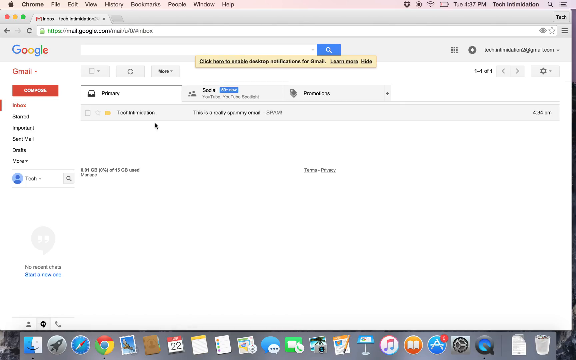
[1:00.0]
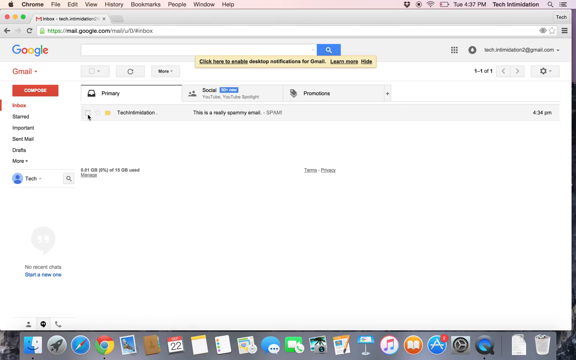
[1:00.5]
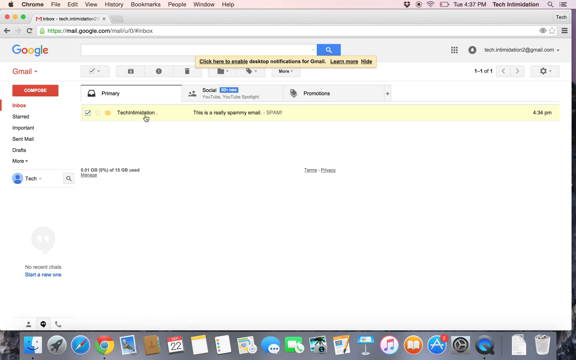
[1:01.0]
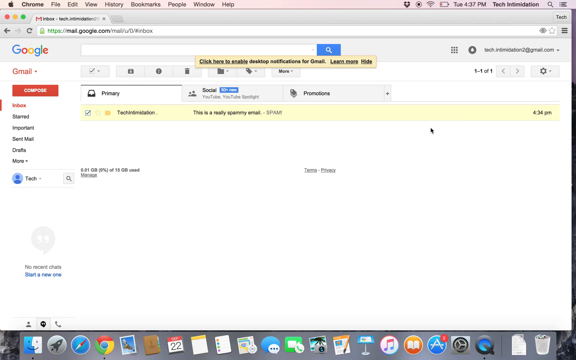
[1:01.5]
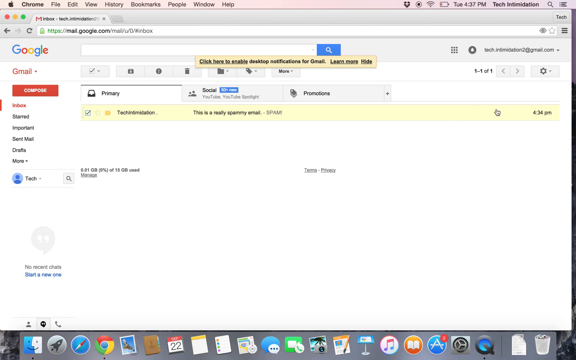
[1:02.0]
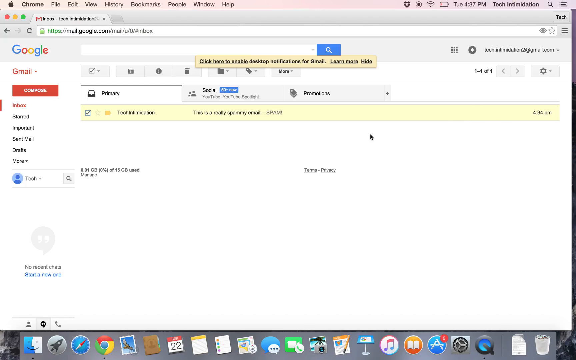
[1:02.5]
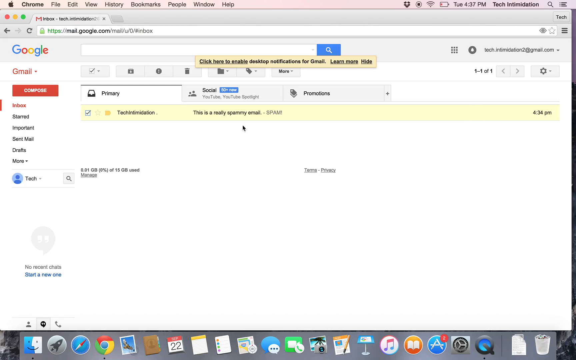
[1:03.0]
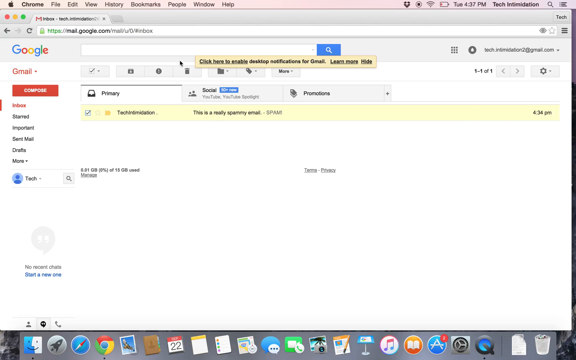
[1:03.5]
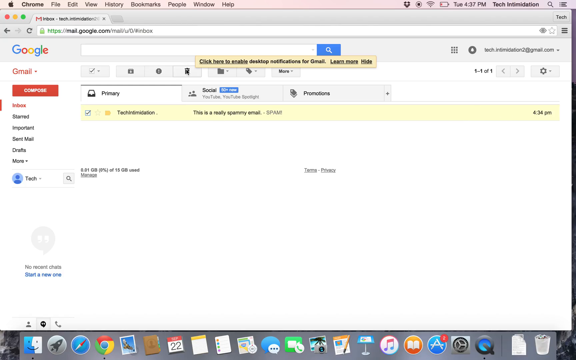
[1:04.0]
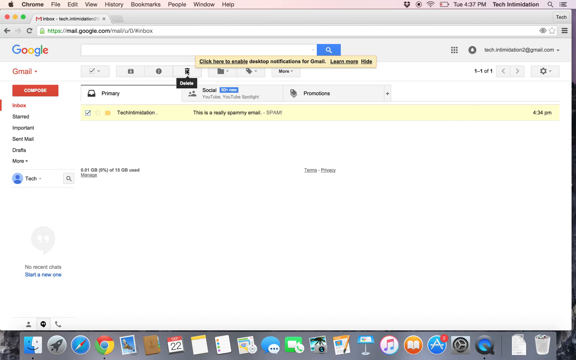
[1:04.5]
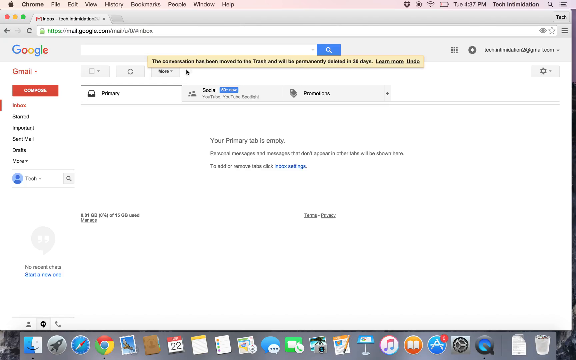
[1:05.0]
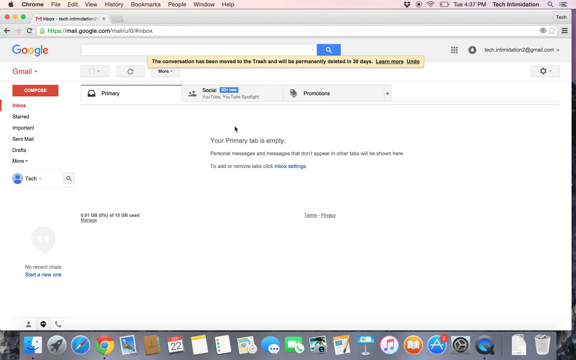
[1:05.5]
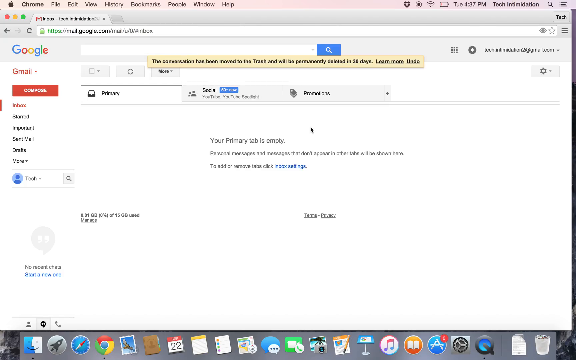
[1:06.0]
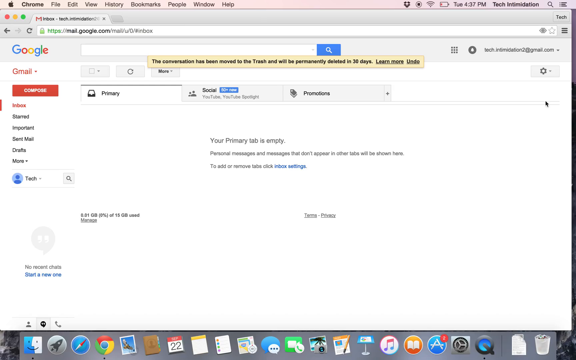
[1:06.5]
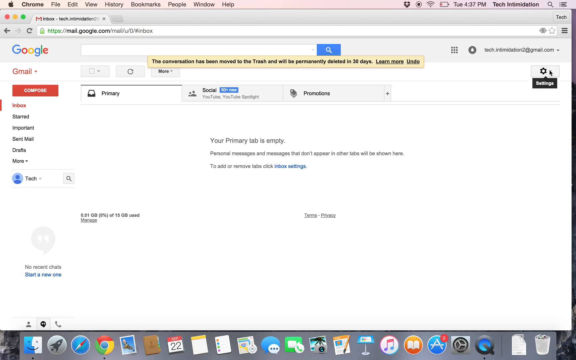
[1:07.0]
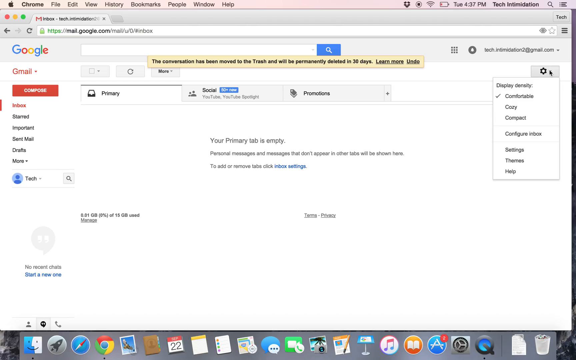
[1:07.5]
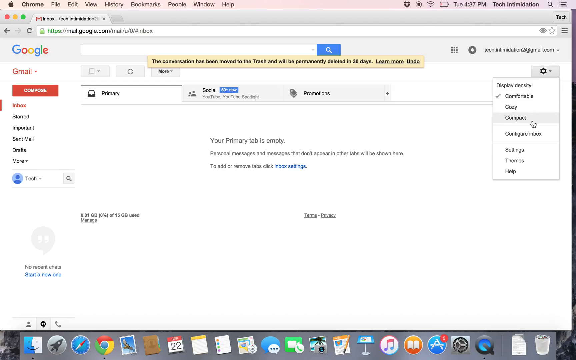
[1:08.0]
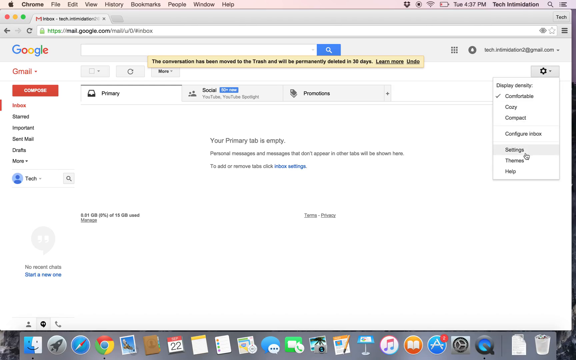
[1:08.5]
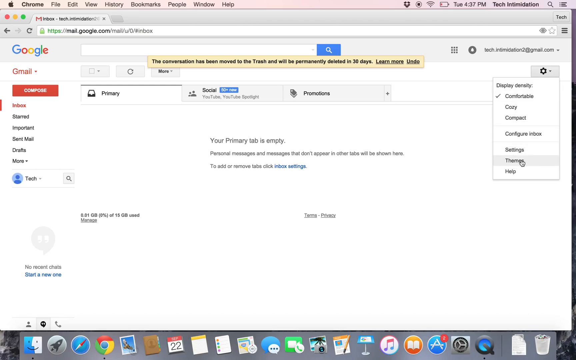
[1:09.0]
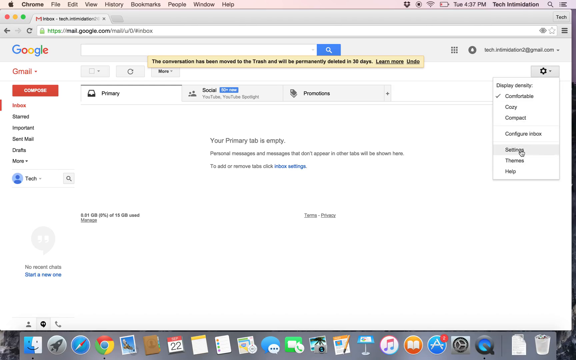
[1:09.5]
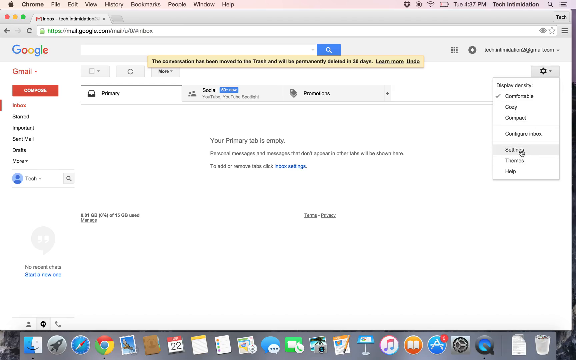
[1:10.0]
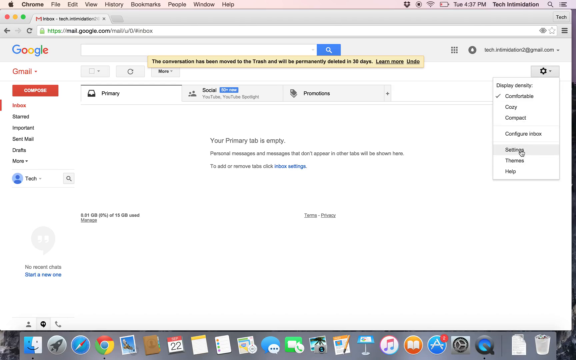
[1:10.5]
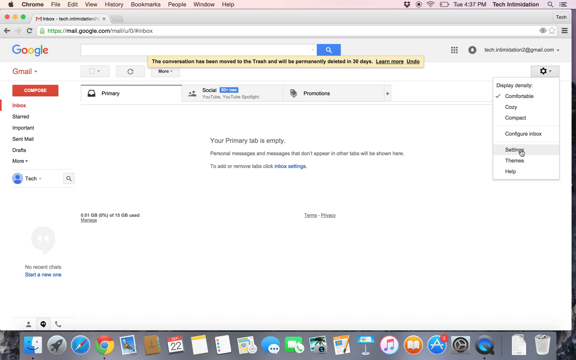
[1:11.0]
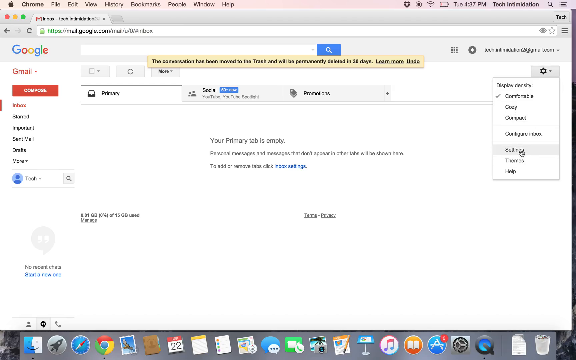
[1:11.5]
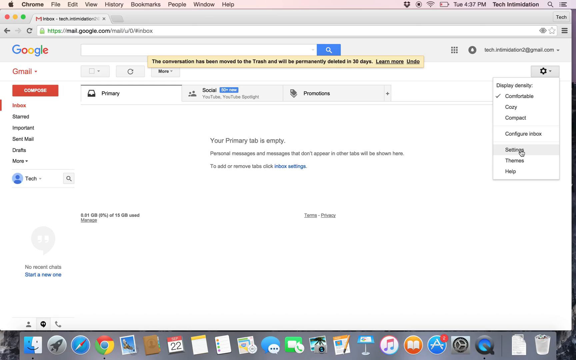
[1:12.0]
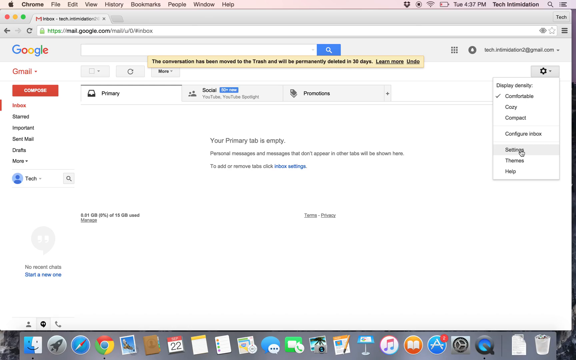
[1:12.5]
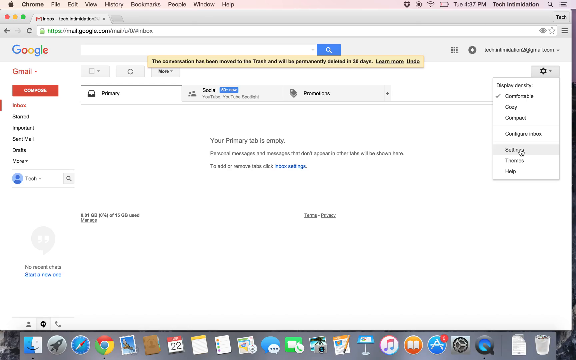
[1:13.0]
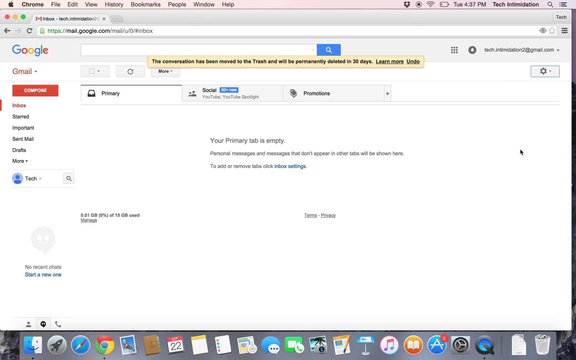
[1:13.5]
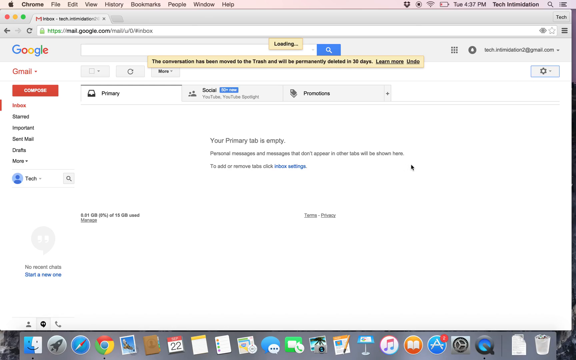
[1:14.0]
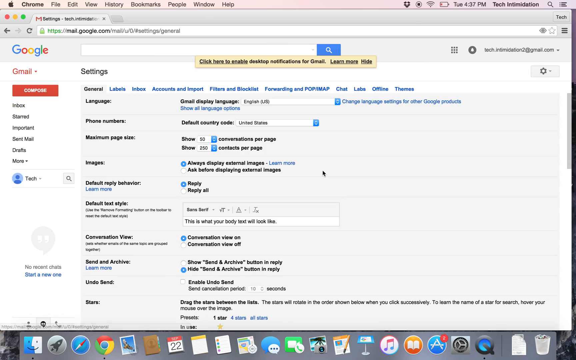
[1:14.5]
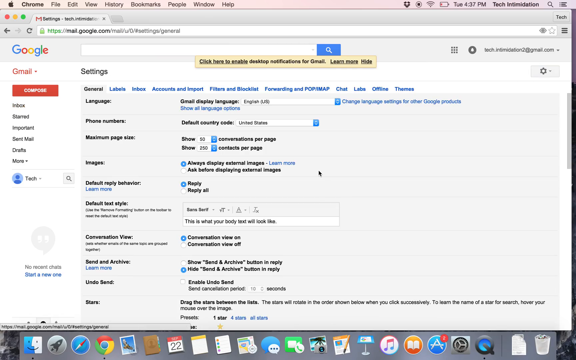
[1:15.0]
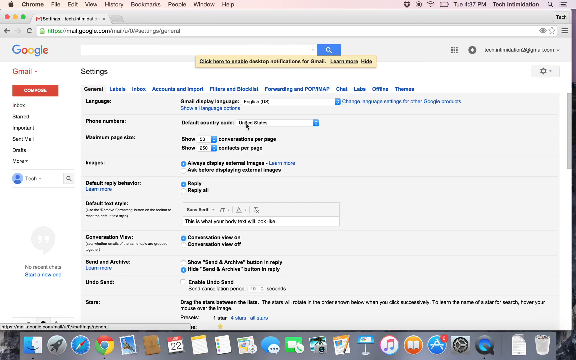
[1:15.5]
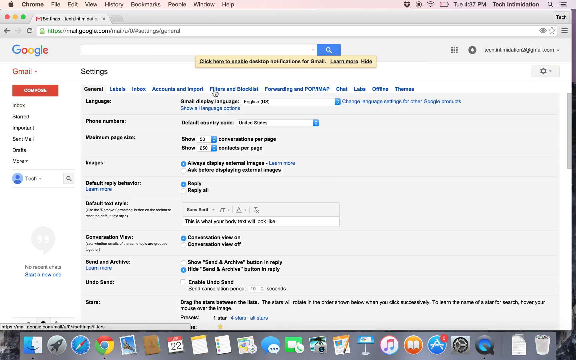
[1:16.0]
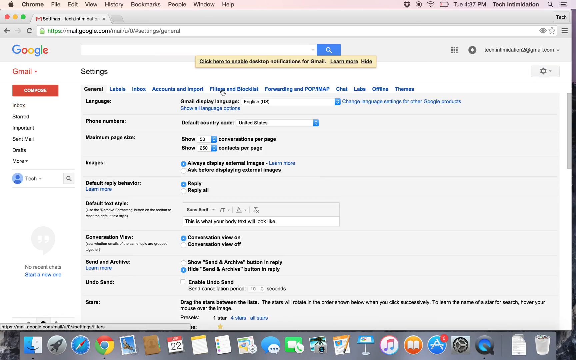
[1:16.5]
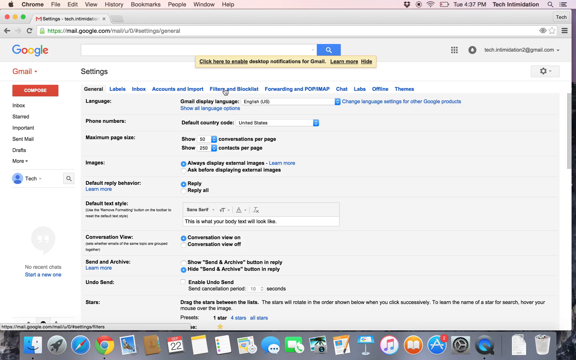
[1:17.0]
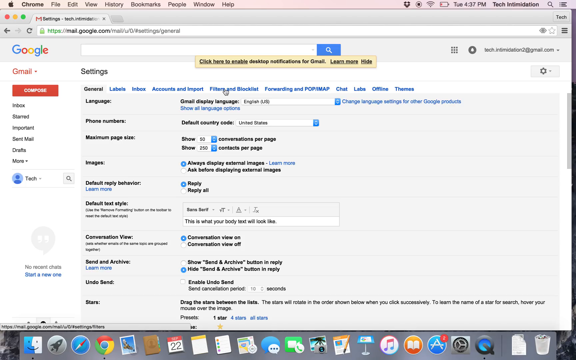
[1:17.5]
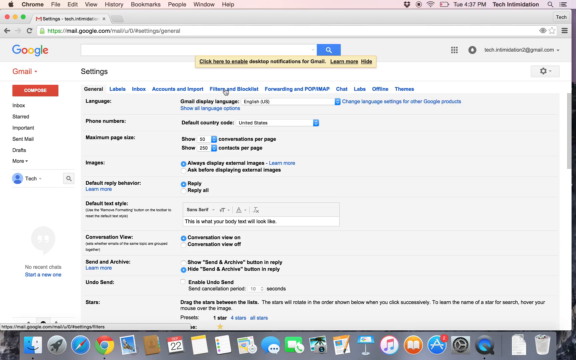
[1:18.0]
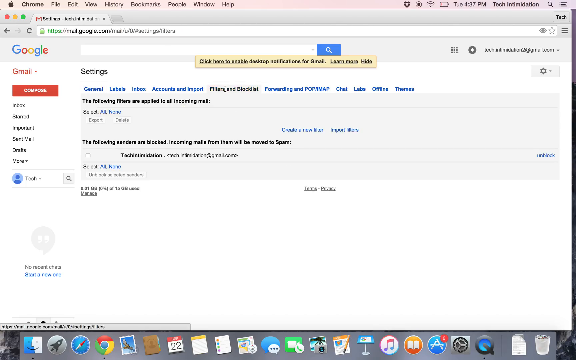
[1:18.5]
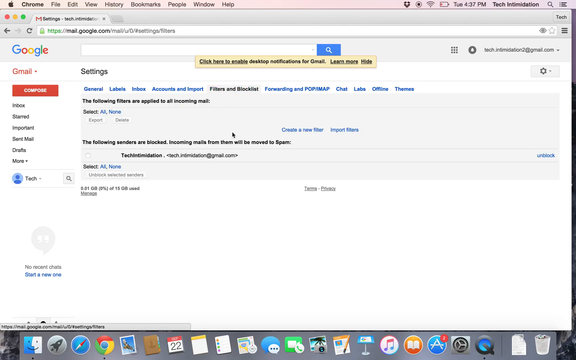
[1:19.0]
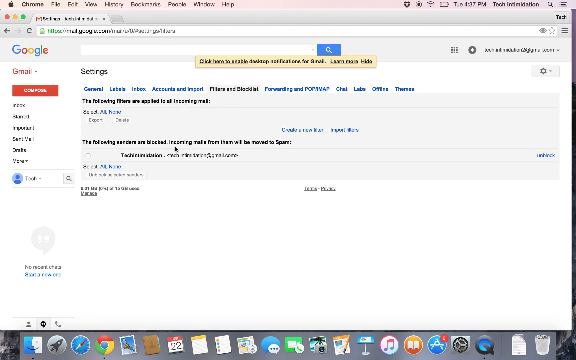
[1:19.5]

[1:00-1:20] From the conversation list, the mouse goes to Settings, clicks on Settings and then clicks on Compact. It then goes through Settings to Filters and the blacklist, showing how to blacklist mail by clicking on Settings and going to the blacklist option to stop messages from coming in. At the top right of the screen there is apparently a search button, along with the time, the date, the battery life and the Wi-Fi connection indicator. At the top left of the screen are Help, Window, People, Bookmarks, History, View, Edit, File and Chrome, together with an Apple logo.